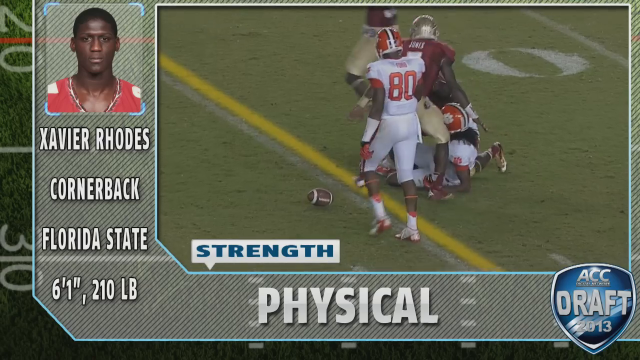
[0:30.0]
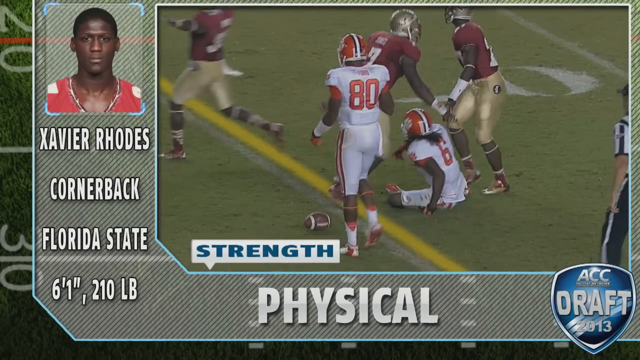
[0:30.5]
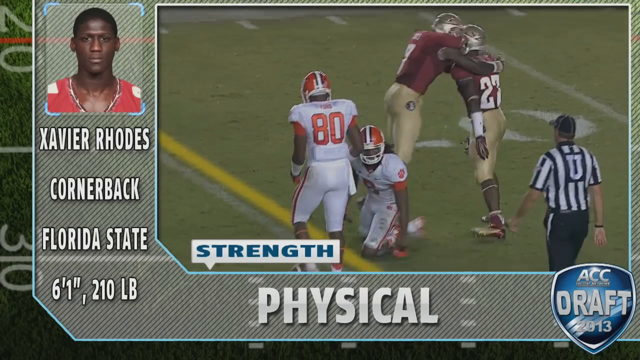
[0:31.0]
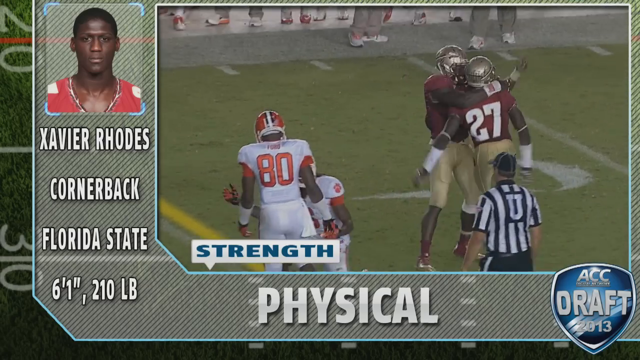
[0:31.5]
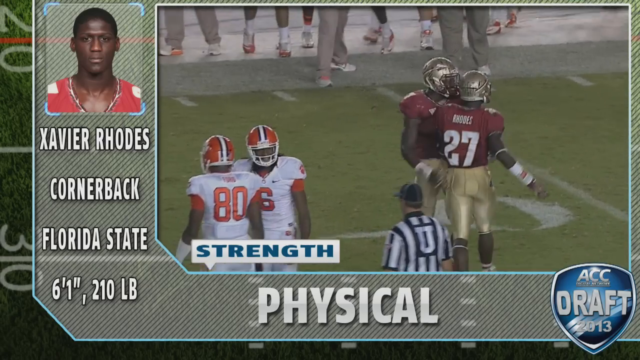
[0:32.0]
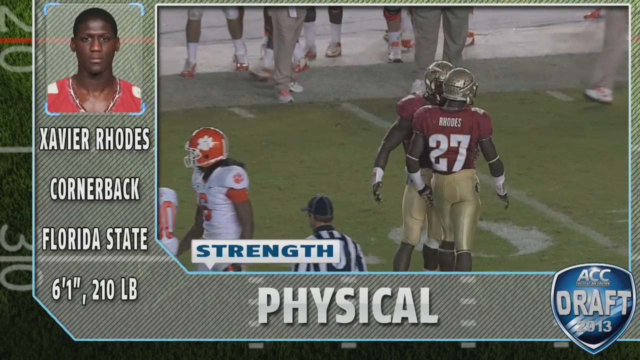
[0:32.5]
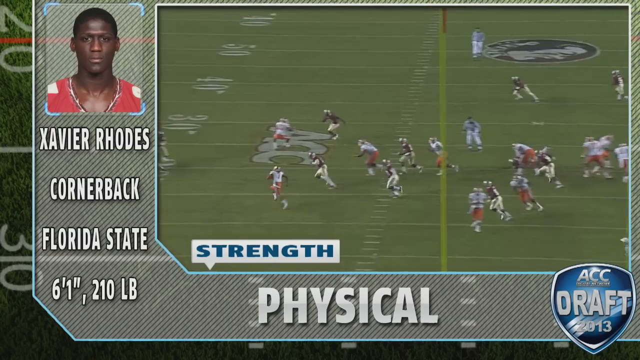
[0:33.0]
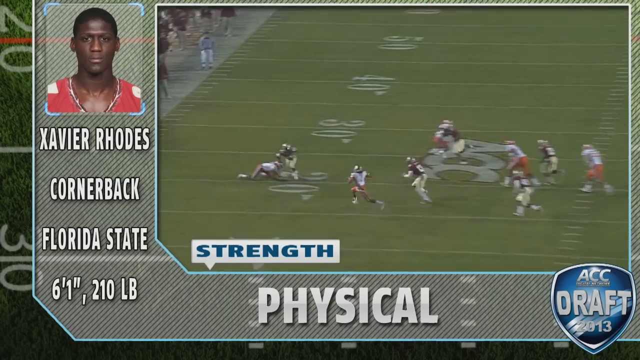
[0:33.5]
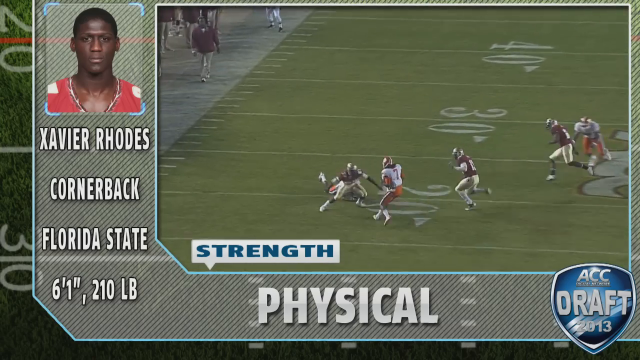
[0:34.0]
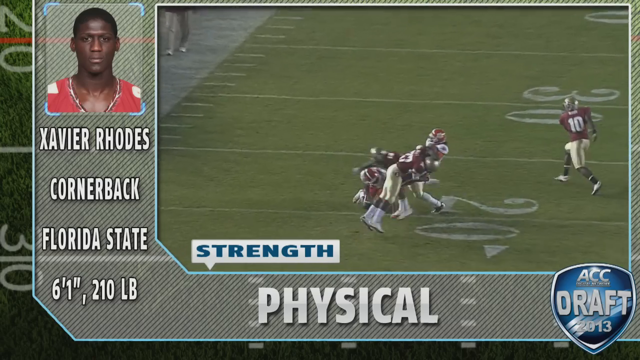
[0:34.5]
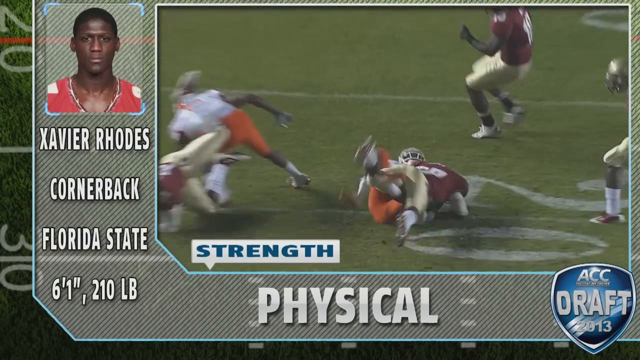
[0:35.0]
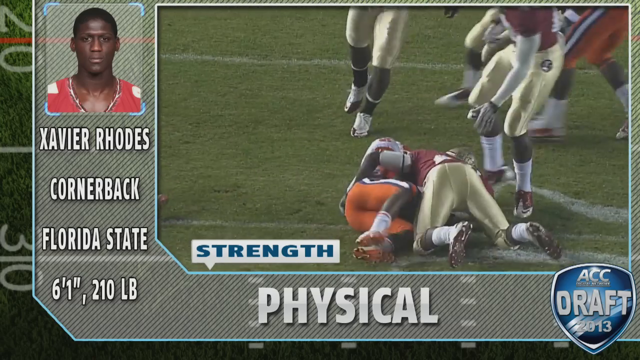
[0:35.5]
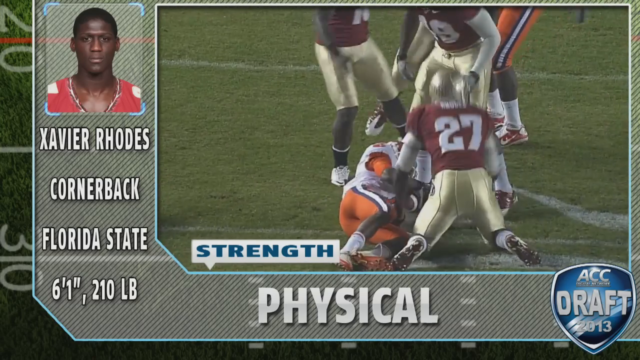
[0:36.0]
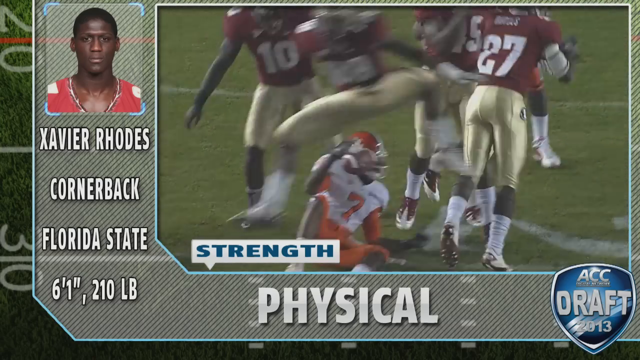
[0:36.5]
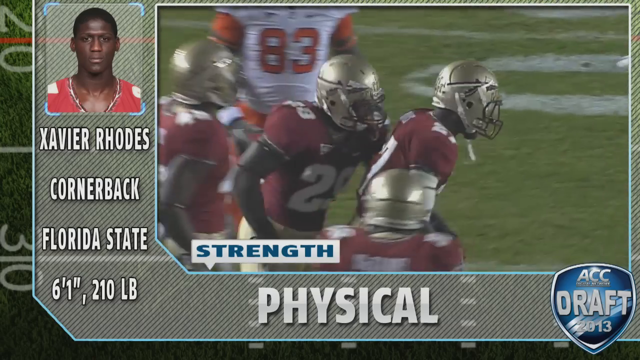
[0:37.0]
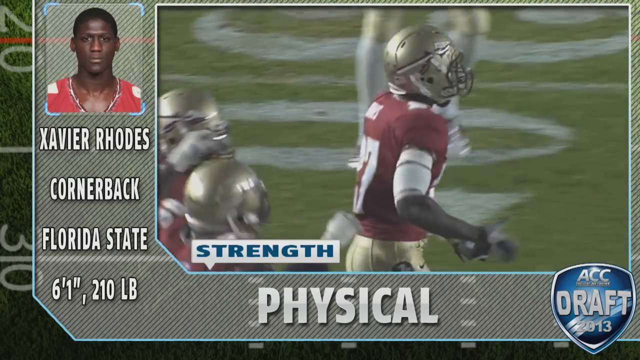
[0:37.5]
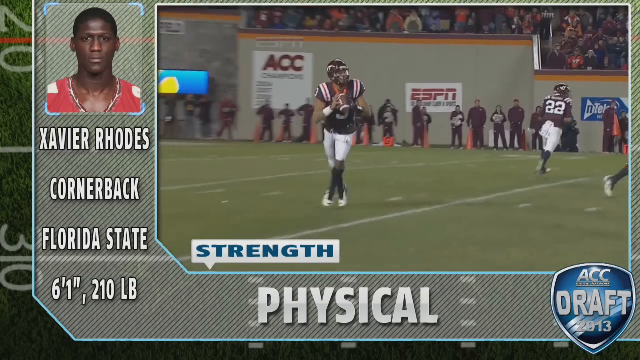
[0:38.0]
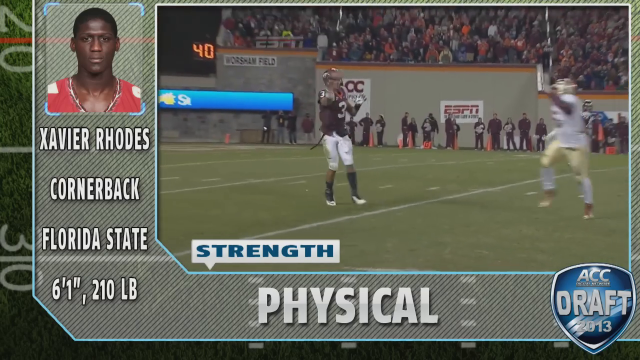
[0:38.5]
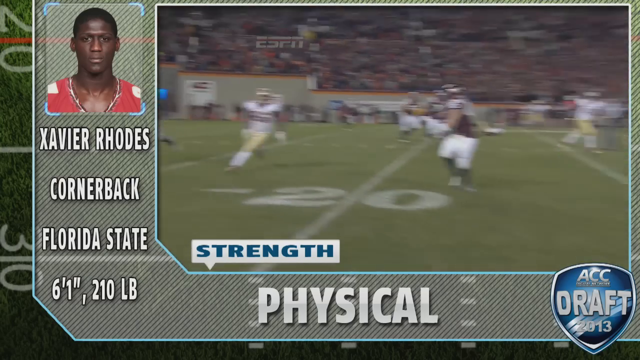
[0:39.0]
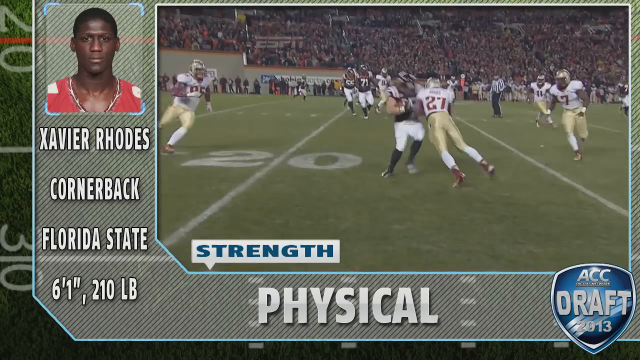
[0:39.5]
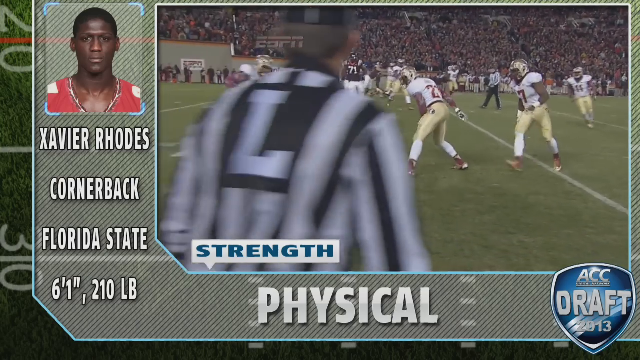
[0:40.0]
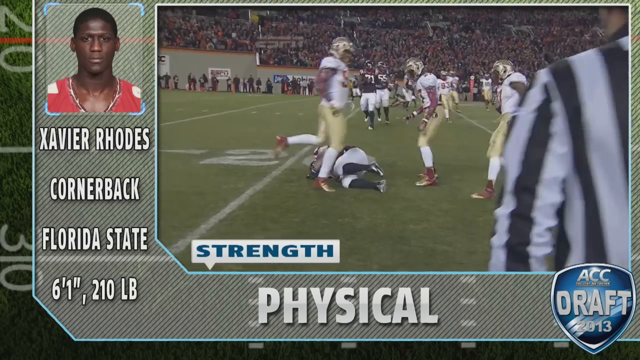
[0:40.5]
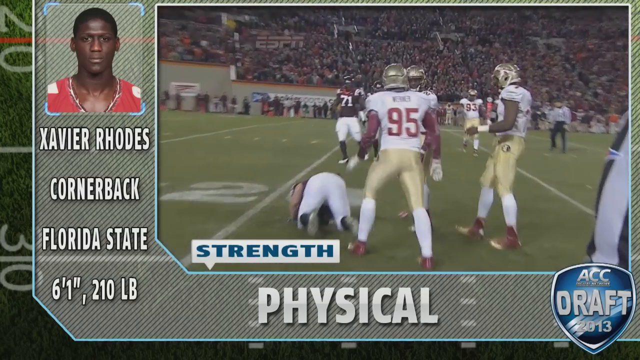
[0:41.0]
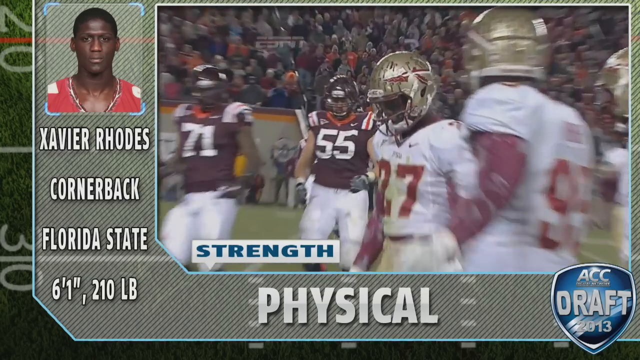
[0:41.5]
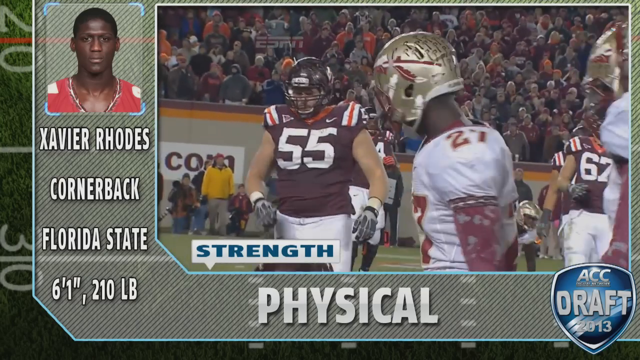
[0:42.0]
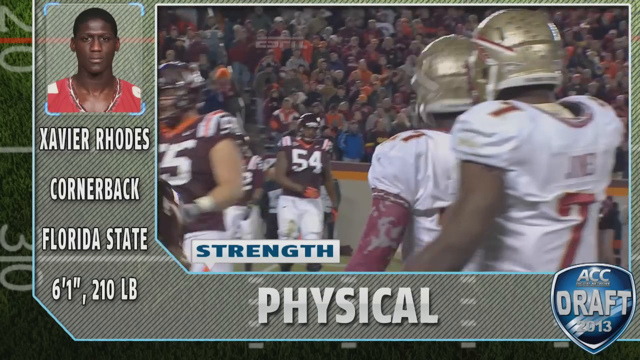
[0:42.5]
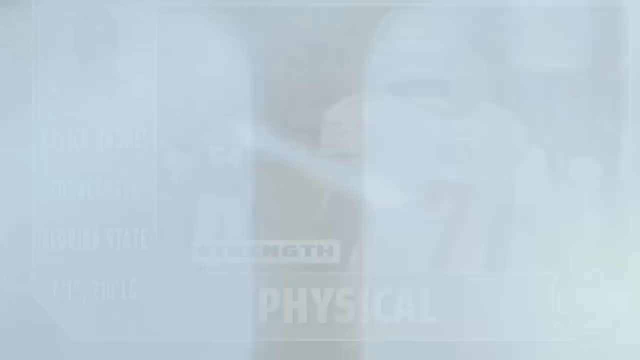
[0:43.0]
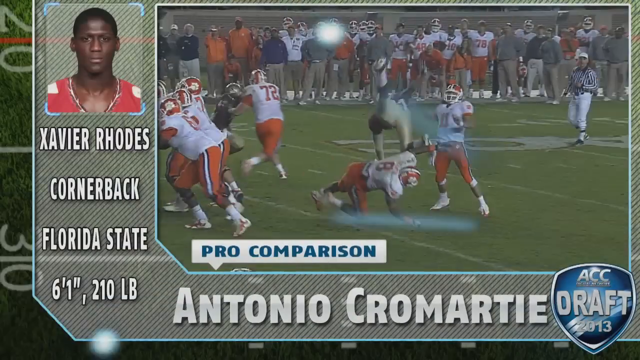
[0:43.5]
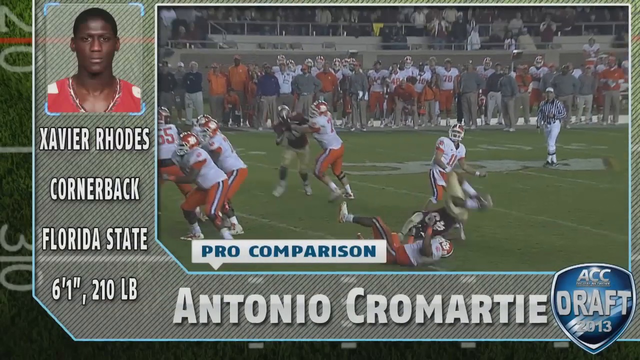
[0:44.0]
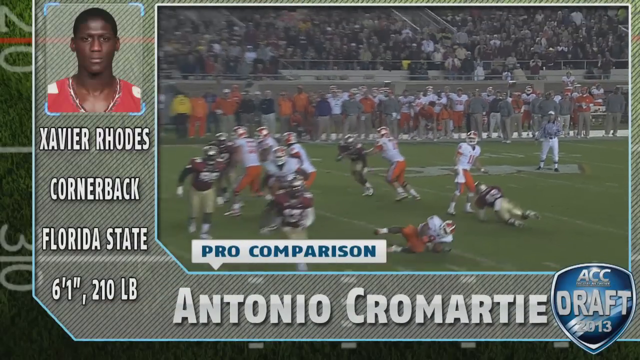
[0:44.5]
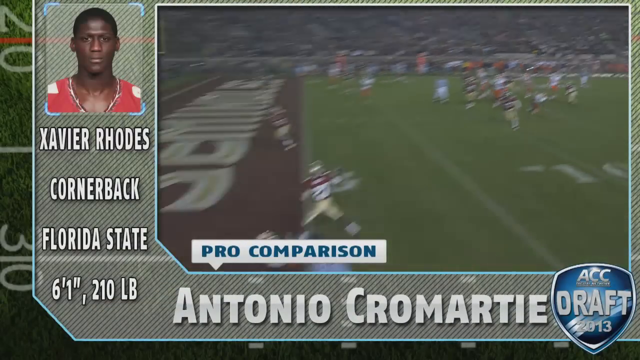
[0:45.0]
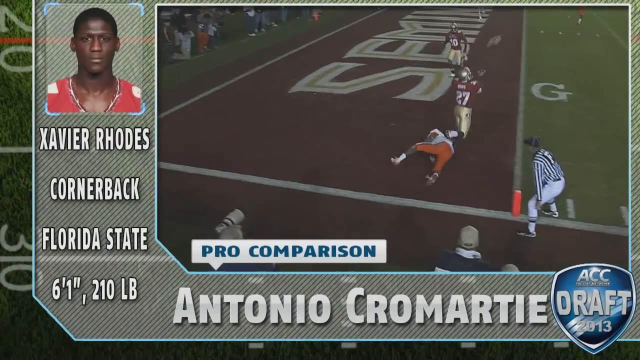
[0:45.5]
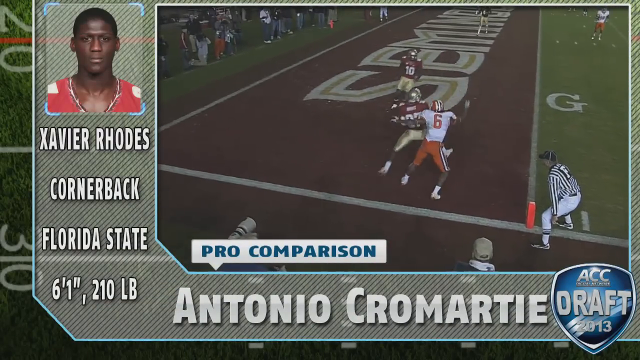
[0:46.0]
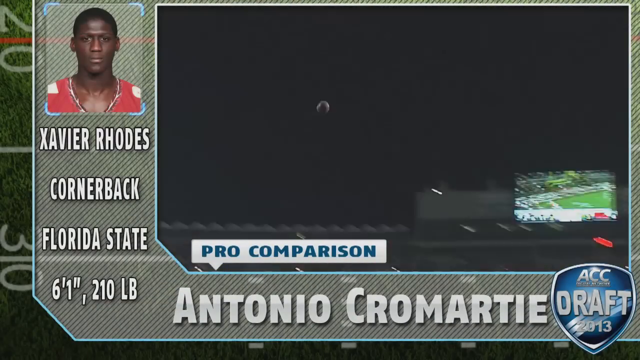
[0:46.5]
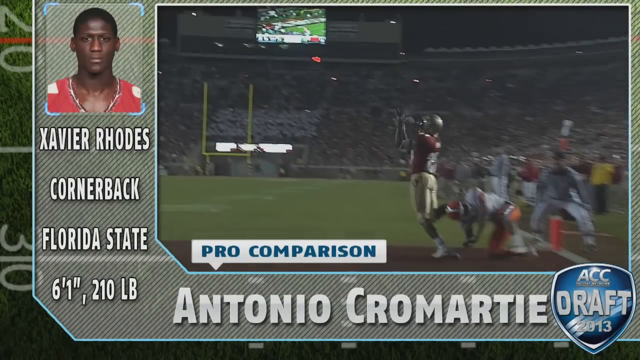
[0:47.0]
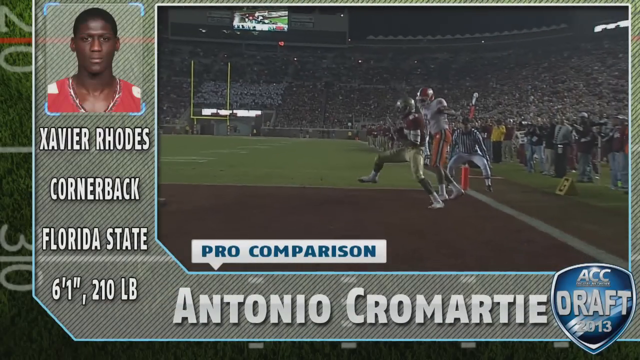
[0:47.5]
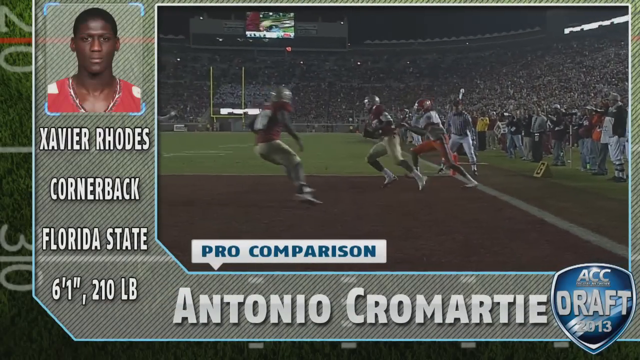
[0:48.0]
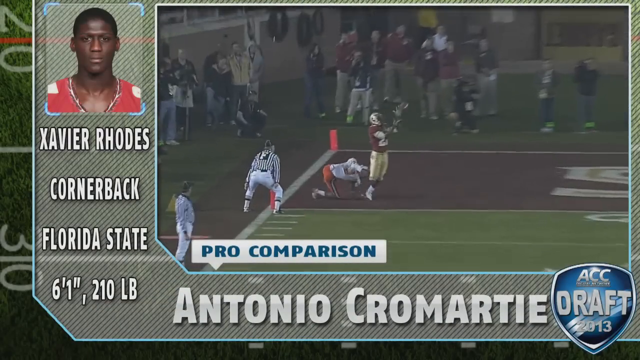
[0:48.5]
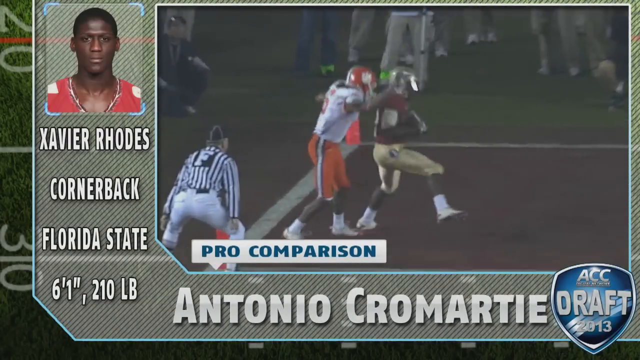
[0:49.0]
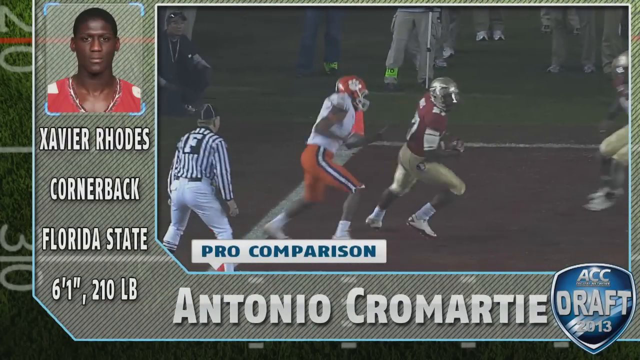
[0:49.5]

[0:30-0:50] The cornerback is shown on screen, and two players are shown hacking it out. A player from the white team throws a rough punch at a purple and gold team player, and the white and gold player's body posture makes the encounter physical. There seems to be lots of movement from both teams, and the stadium is abuzz, with supporters of both teams making many movements and cheerful gestures. The game seems to progress.